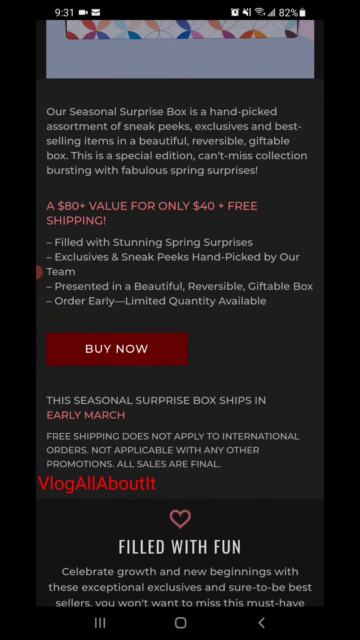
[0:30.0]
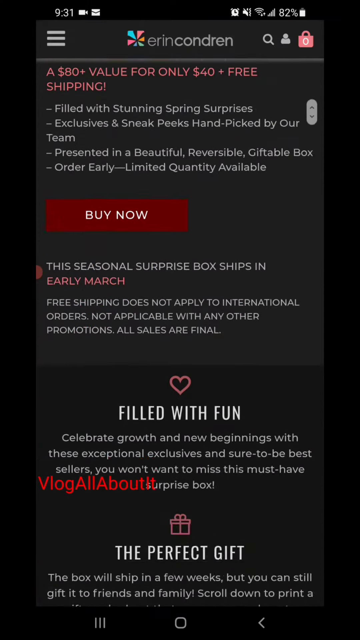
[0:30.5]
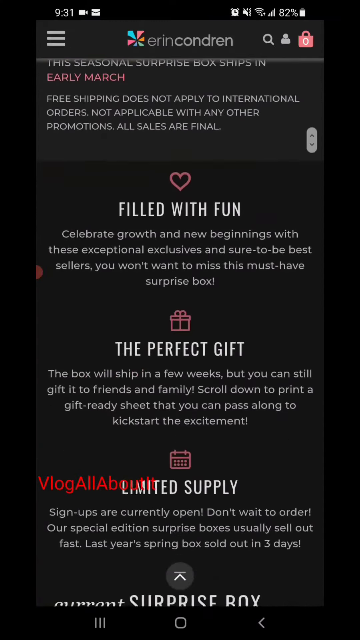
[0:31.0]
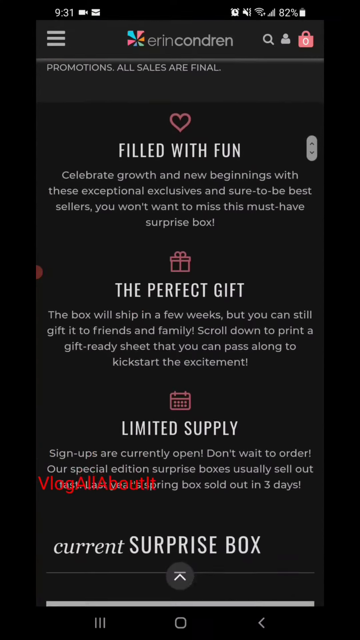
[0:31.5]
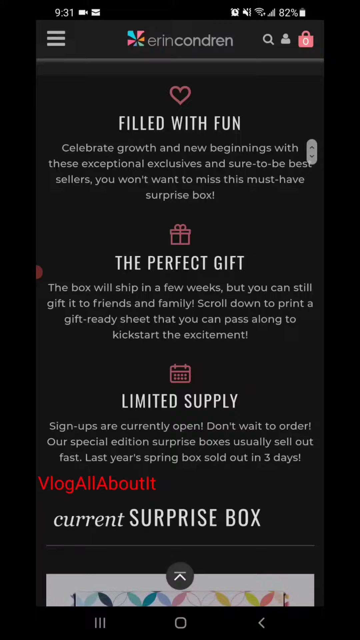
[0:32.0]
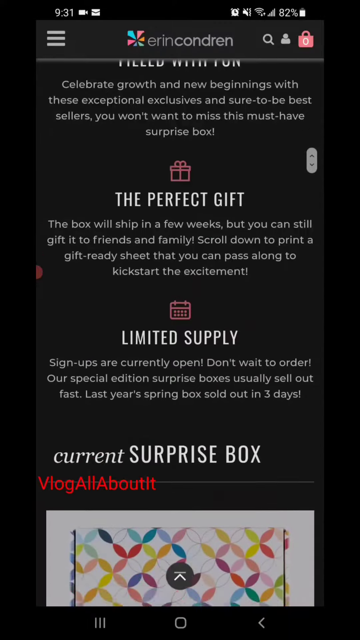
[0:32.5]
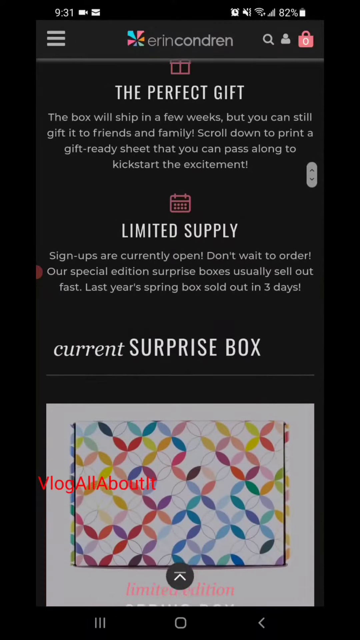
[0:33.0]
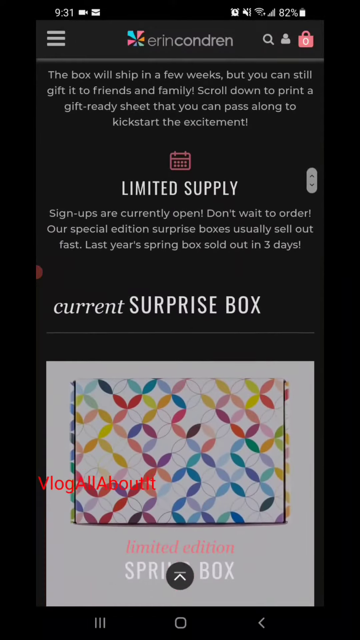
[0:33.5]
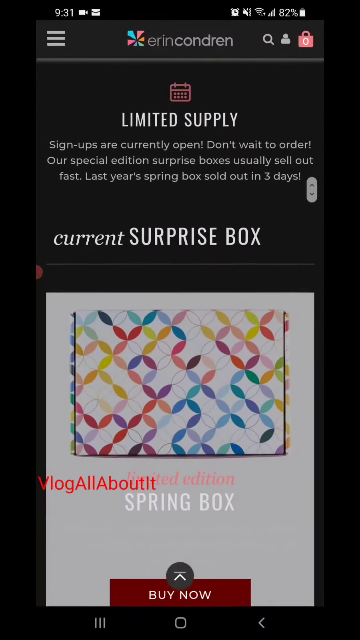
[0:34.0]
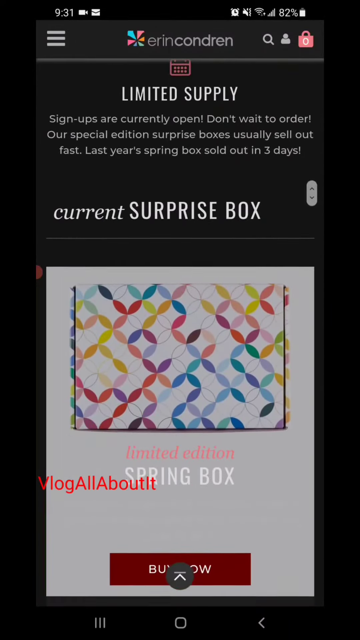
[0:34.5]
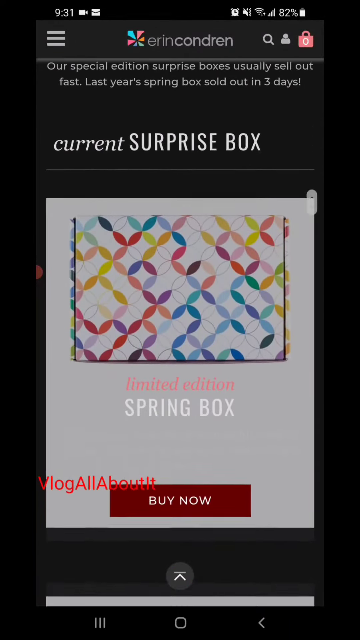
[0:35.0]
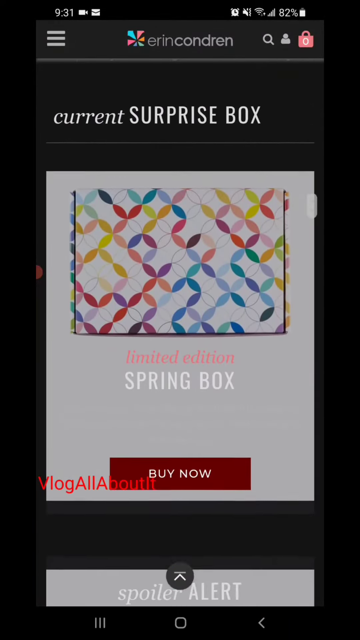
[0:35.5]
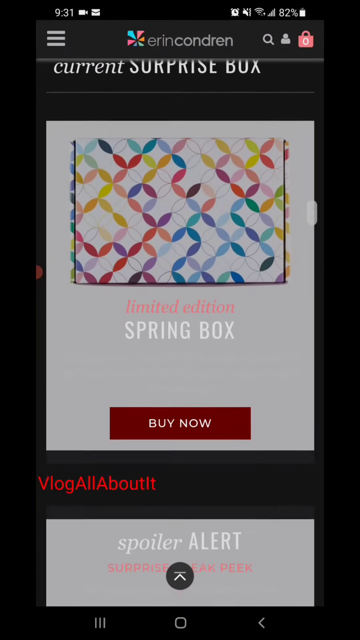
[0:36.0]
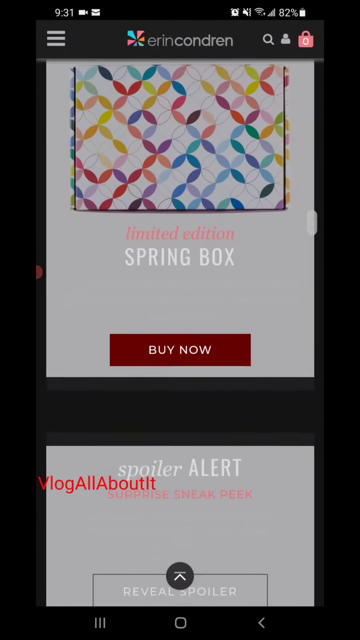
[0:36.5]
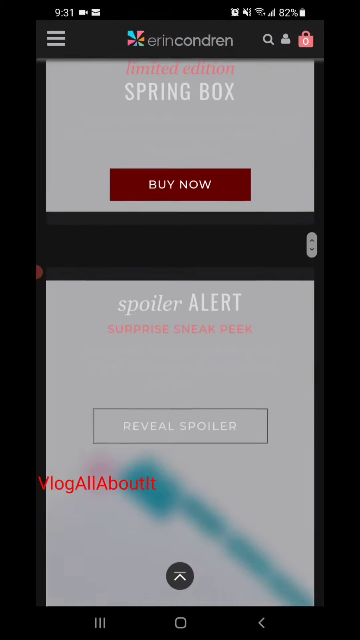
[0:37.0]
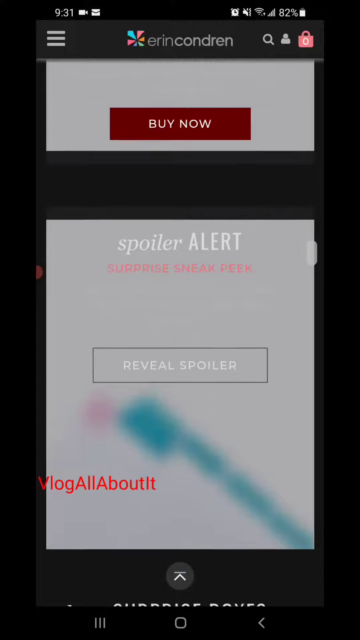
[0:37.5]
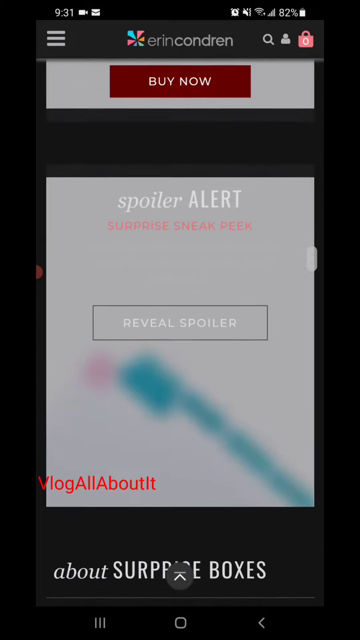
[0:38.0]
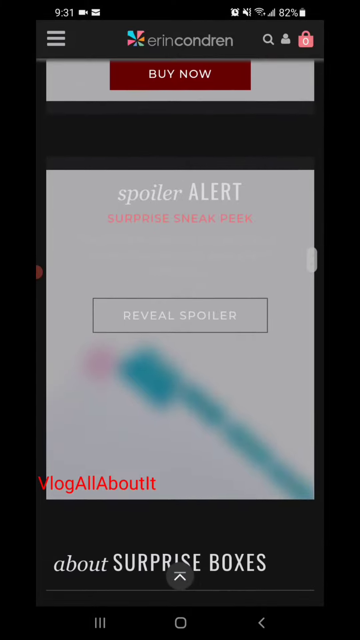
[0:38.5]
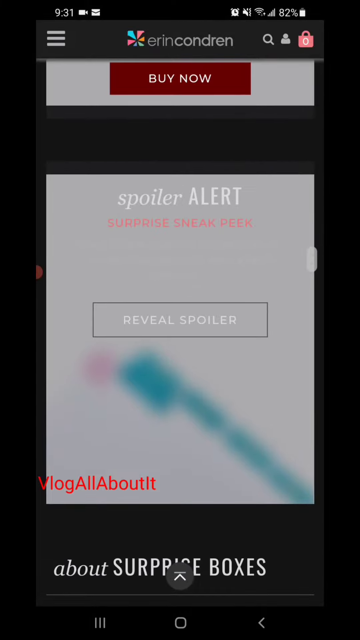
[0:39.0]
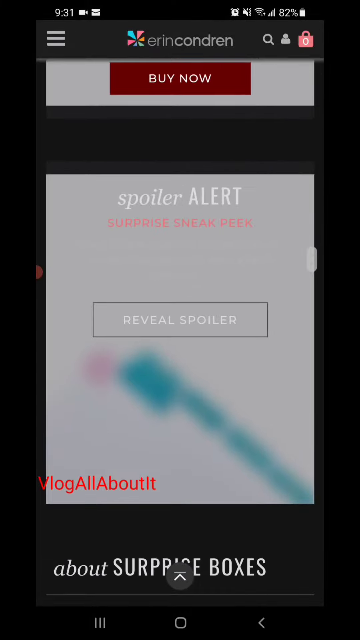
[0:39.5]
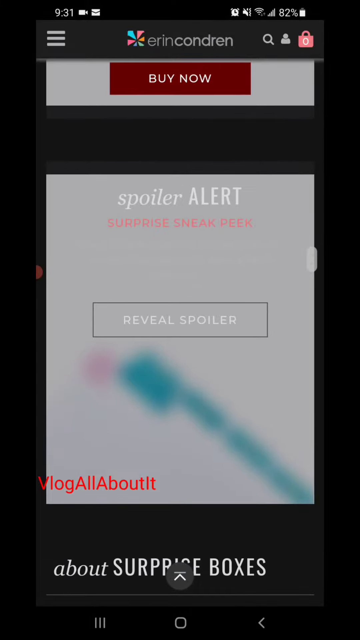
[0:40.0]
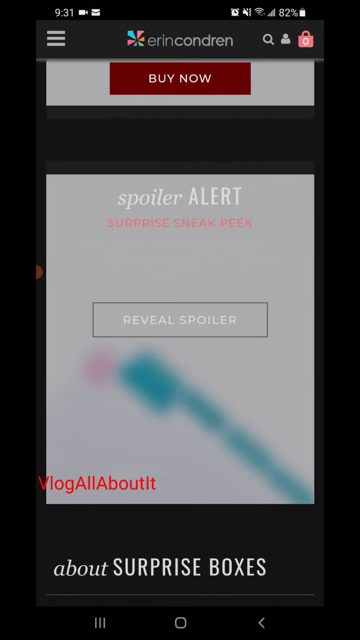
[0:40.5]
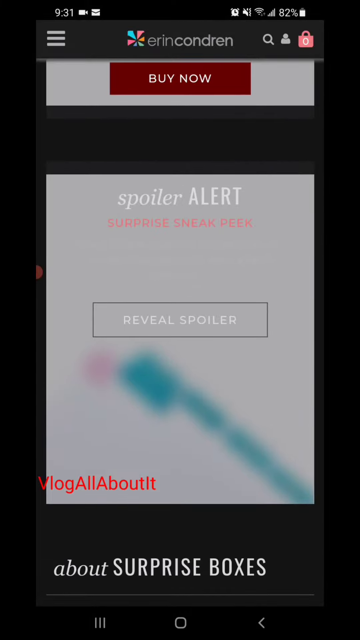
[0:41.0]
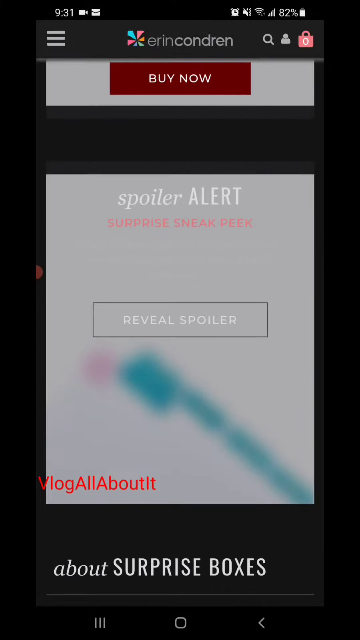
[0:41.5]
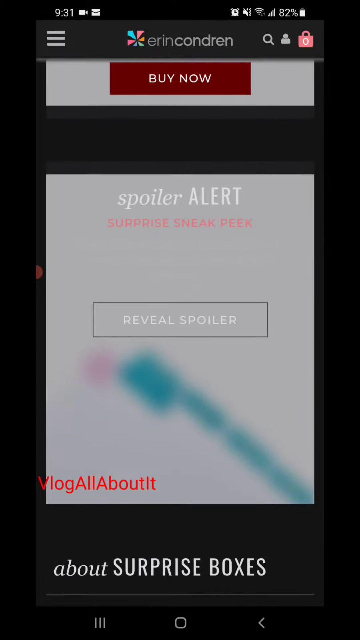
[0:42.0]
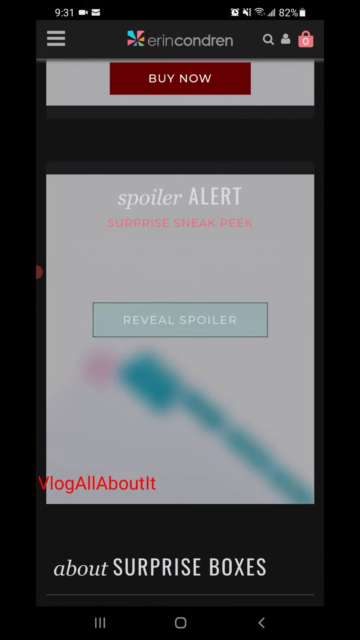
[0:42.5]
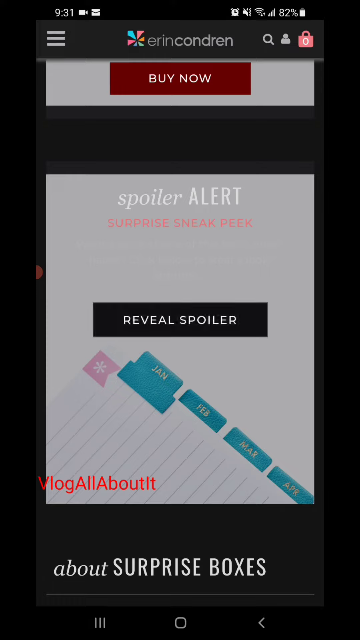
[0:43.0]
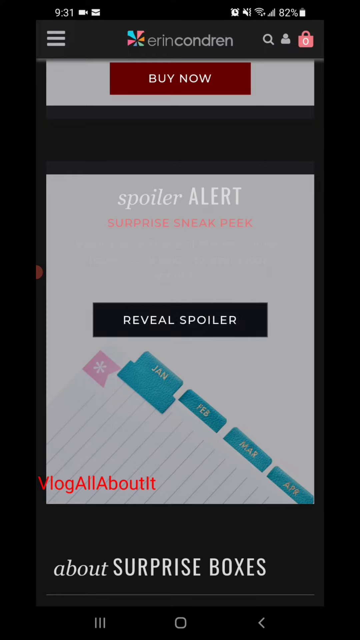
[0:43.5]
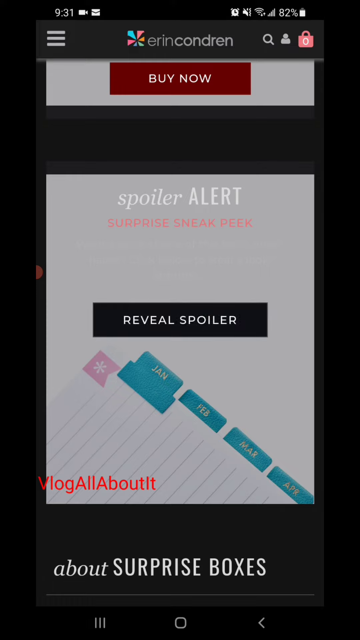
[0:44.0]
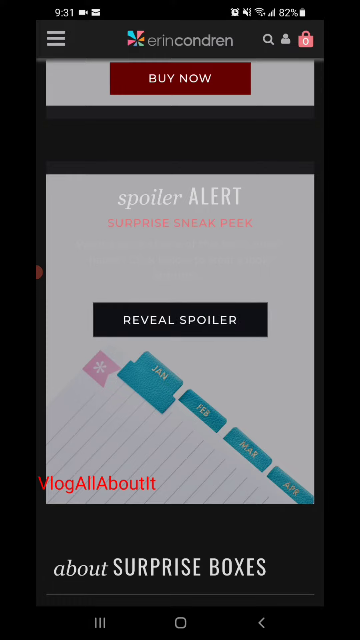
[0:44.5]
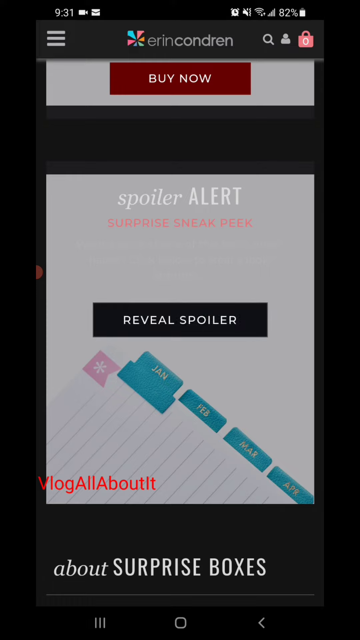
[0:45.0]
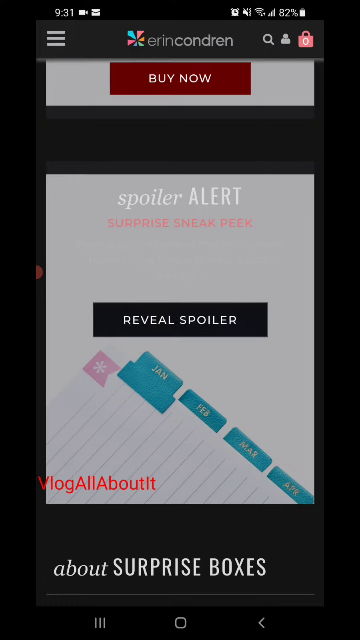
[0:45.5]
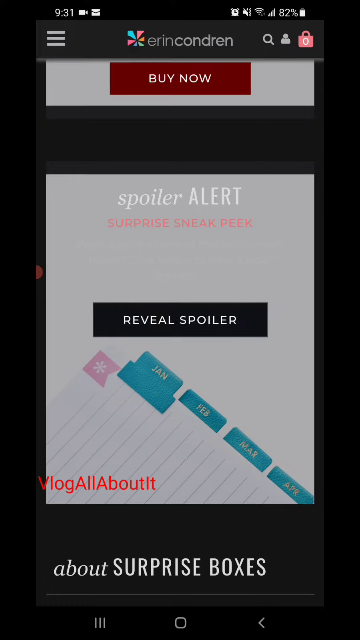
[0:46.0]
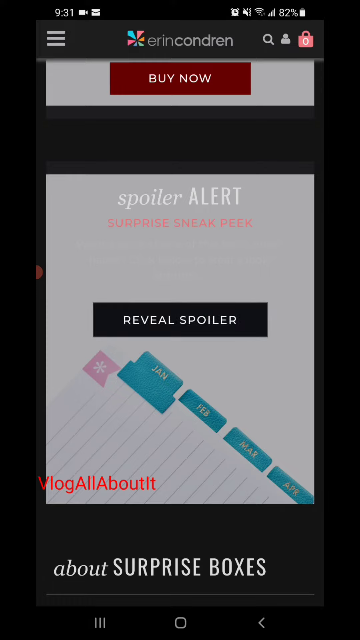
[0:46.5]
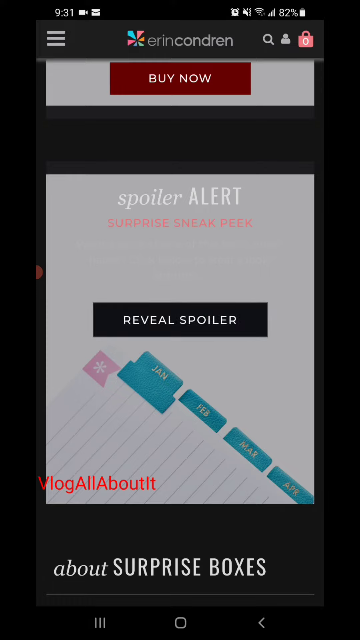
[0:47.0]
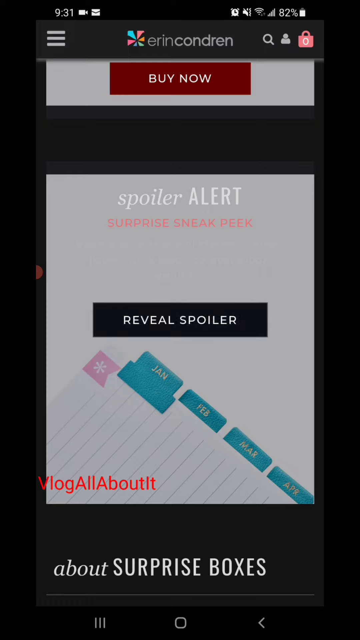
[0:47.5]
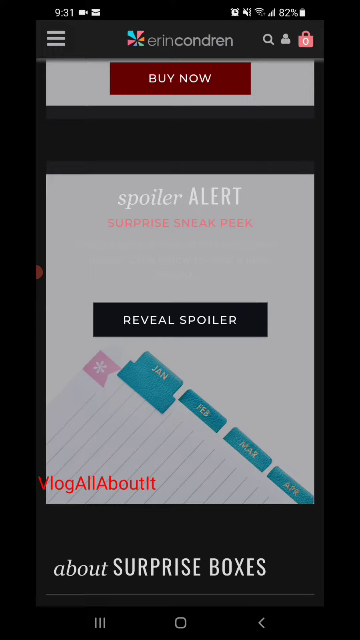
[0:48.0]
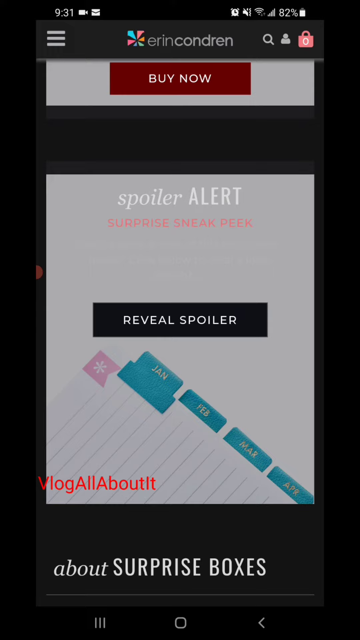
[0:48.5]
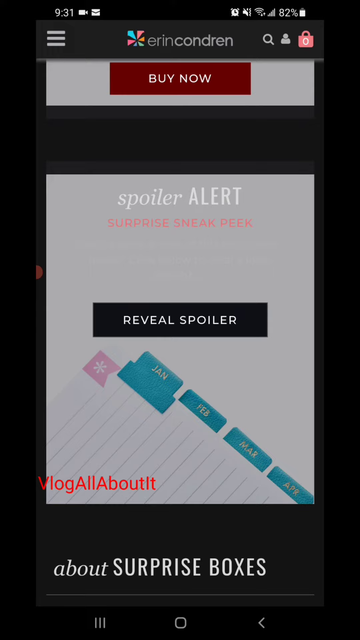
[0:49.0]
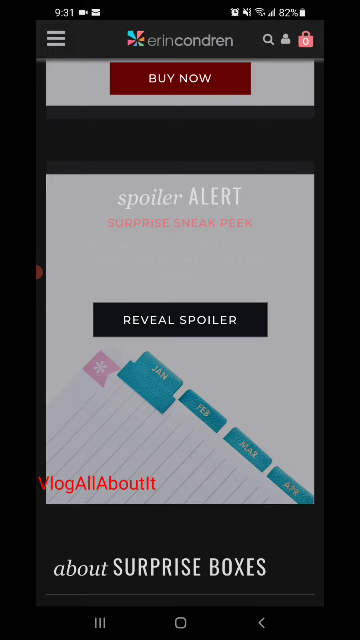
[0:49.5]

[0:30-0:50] The view appears to be on the Aaron Conrad site. Text reads "our seasonal surprise box is hand-picked assortment of sneak peeks exclusives and best-selling items in beautiful reversible giftable box. This is a special edition can't miss collection bursting with fabulous surprises," followed by "$80 value for $40 with free shipping," filled with stunning surprises and exclusive sneak peeks, hand-picked by the team and presented in a beautiful reversible giftable box. It says the seasonal surprise box ships in early March, free shipping does not apply to international orders, it cannot be combined with other promotions, and all sales are final. Further down, text reads "filled with fun," celebrating growth and new beginnings with these exceptional exclusives, "sure to be the best sellers you don't want to miss." Next comes text about limited supplies: sign-up is currently open, don't wait, surprise boxes usually sell out fast, and last year's spring box sold out in three days, followed by text about the current box. There is also text about it being a perfect gift: the box will ship in a few weeks but can still be gifted to friends and family, with an instruction to scroll down to print a gift-ready sheet to pass along to kick-start the excitement. The current spring box is then shown with a tab and a spoiler alert that reveals spoilers. At first the spoilers are kind of blacked out and fuzzy, making them hard to see, and the last text visible says "about surprise boxes." The view then becomes clear, and the revealed spoiler appears to be a month tab, with the months of the year shown in tab form.